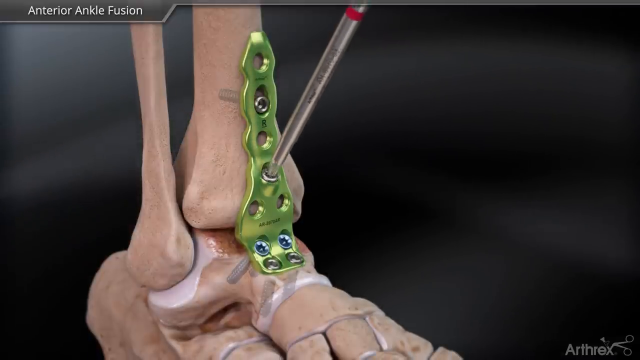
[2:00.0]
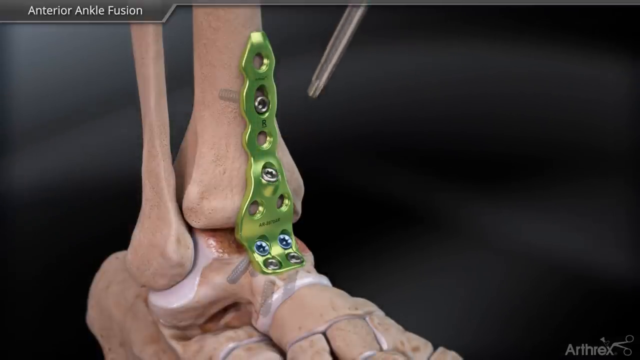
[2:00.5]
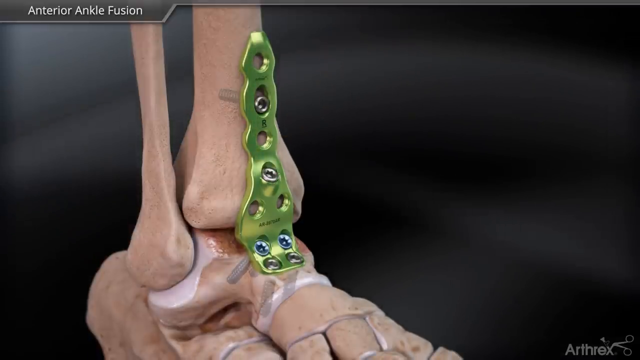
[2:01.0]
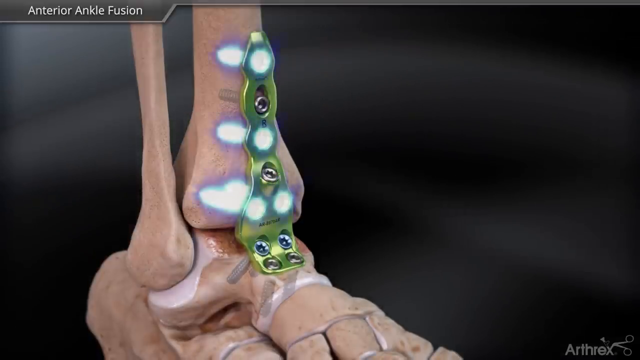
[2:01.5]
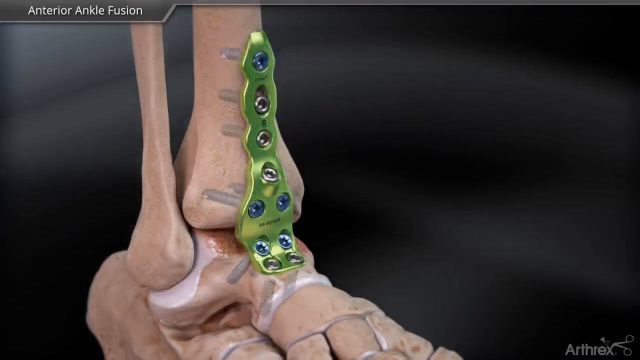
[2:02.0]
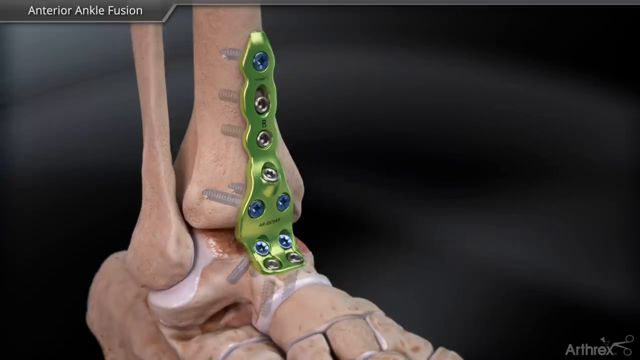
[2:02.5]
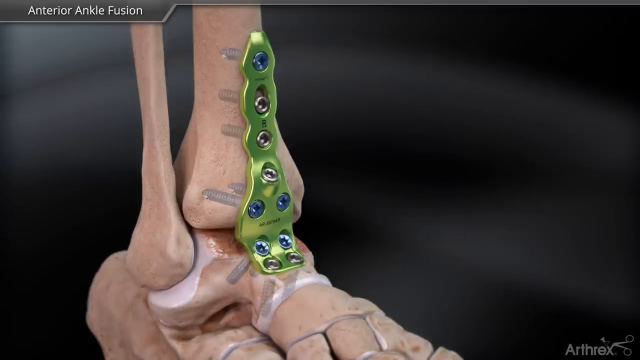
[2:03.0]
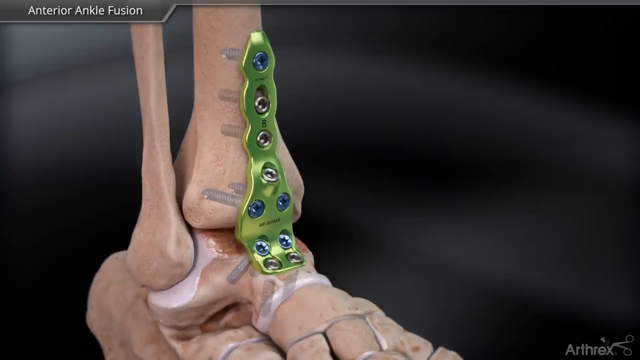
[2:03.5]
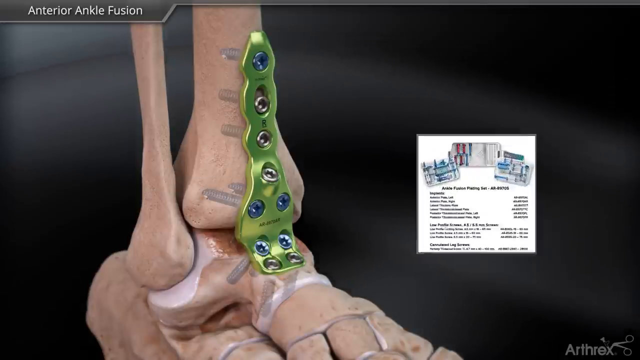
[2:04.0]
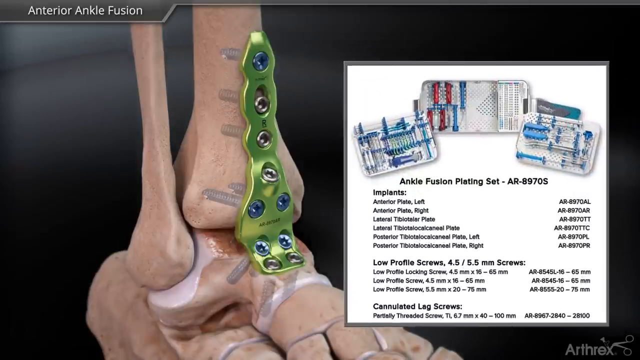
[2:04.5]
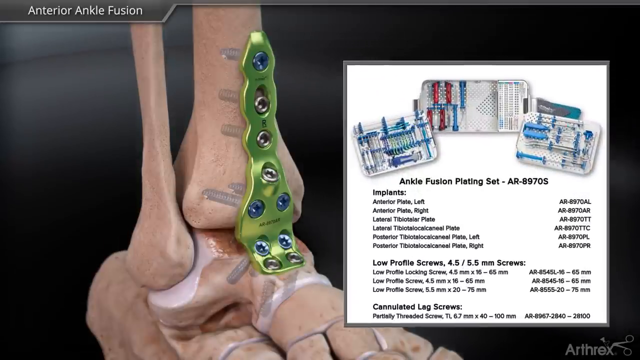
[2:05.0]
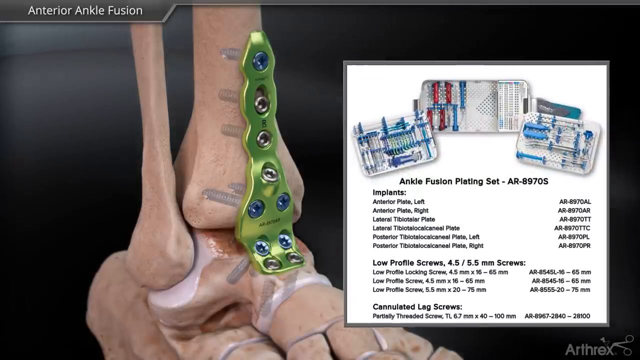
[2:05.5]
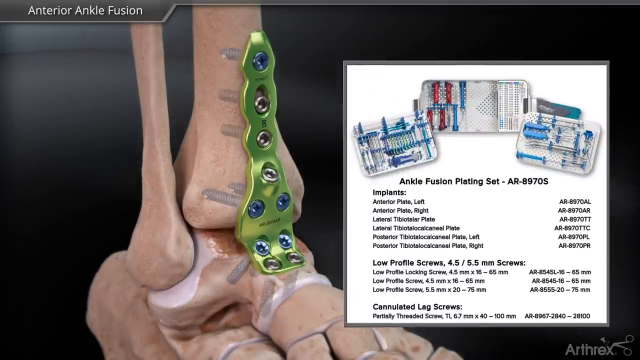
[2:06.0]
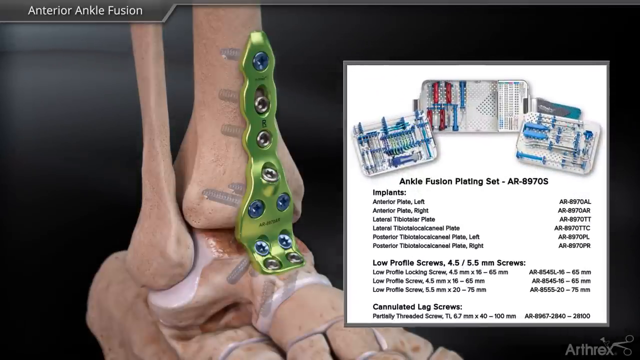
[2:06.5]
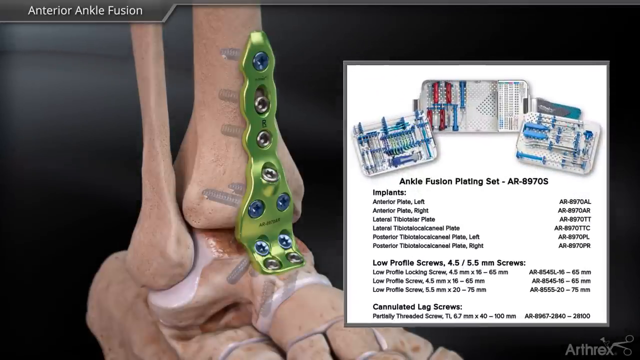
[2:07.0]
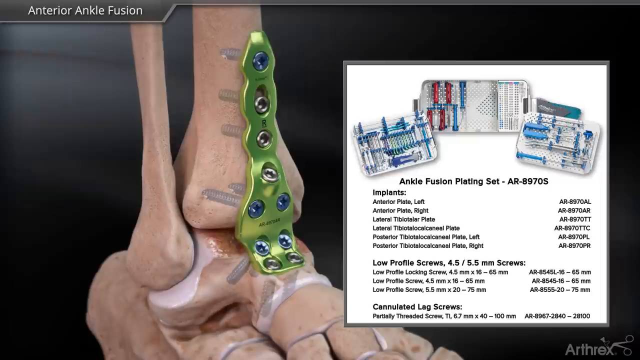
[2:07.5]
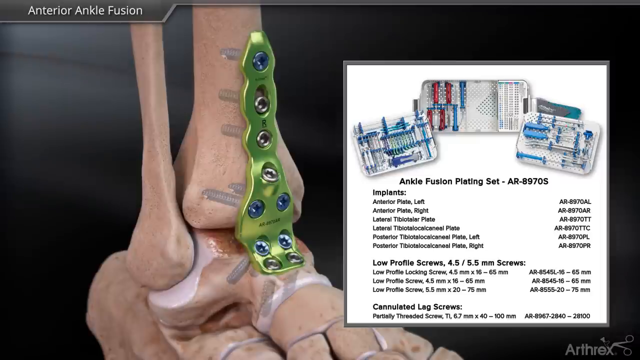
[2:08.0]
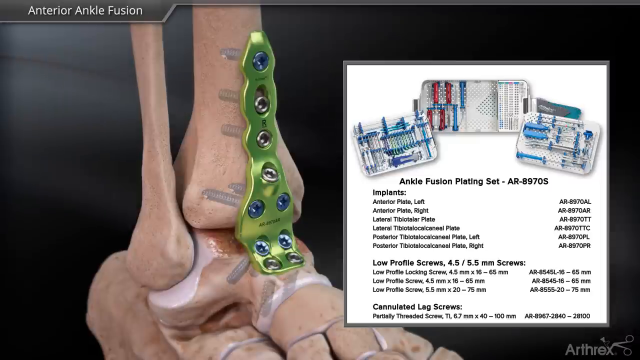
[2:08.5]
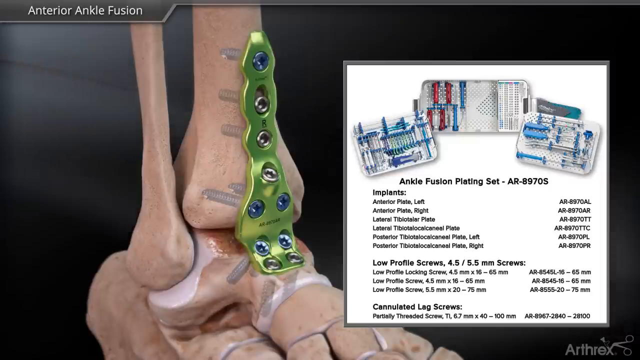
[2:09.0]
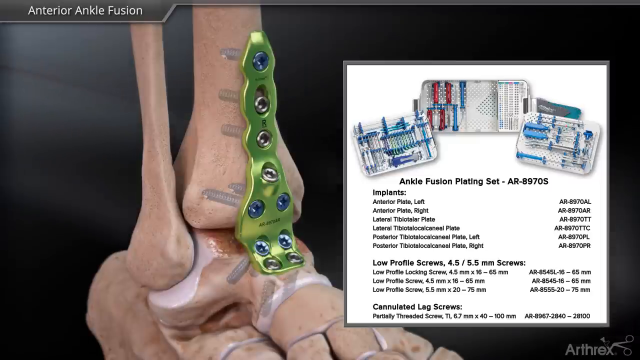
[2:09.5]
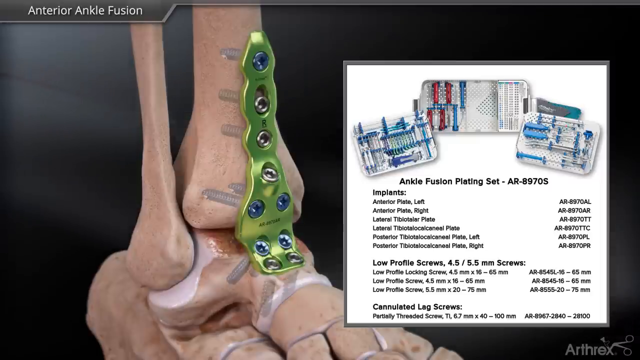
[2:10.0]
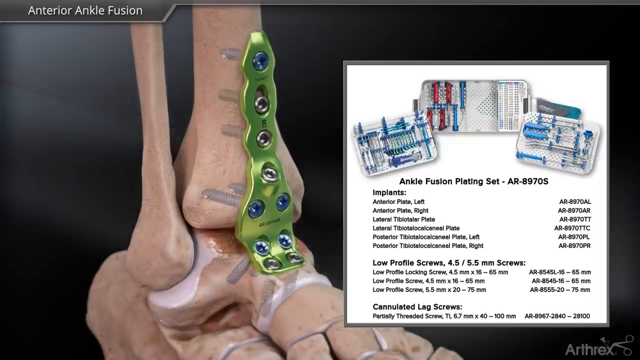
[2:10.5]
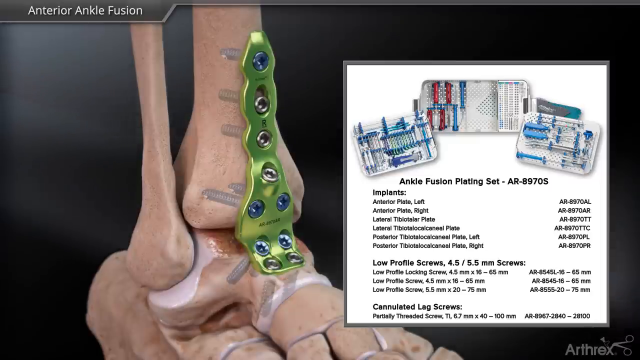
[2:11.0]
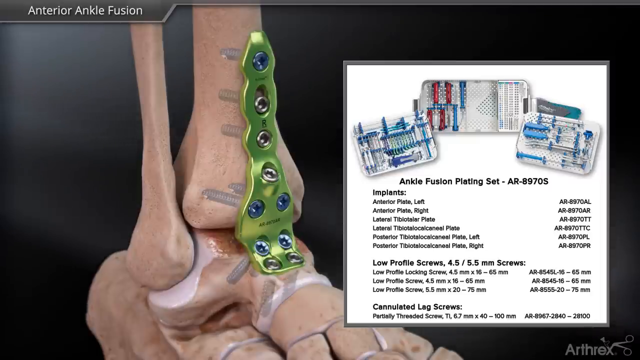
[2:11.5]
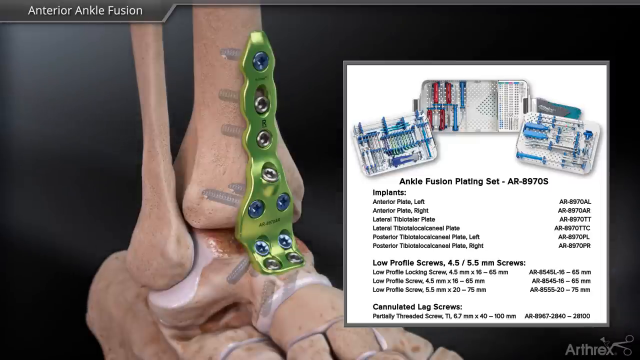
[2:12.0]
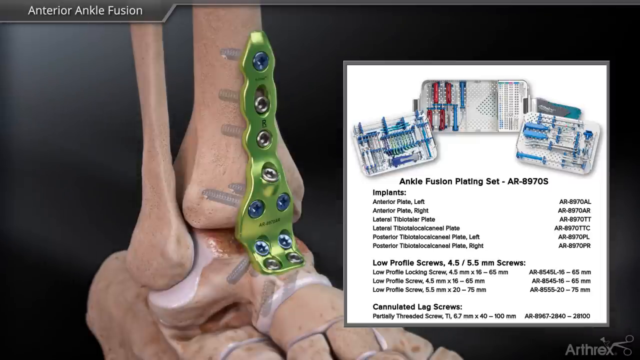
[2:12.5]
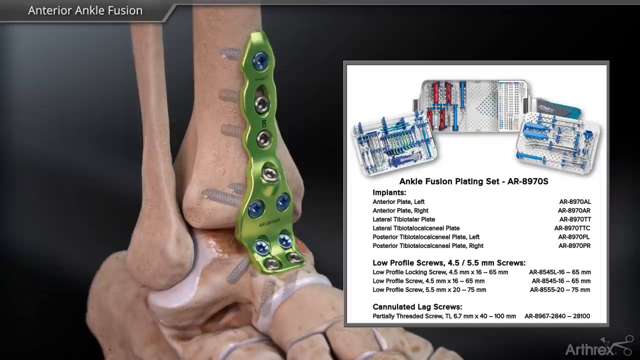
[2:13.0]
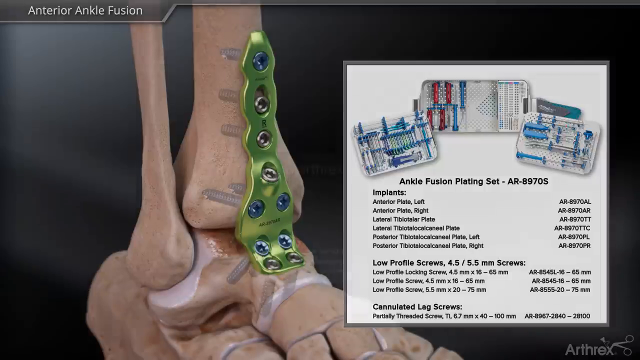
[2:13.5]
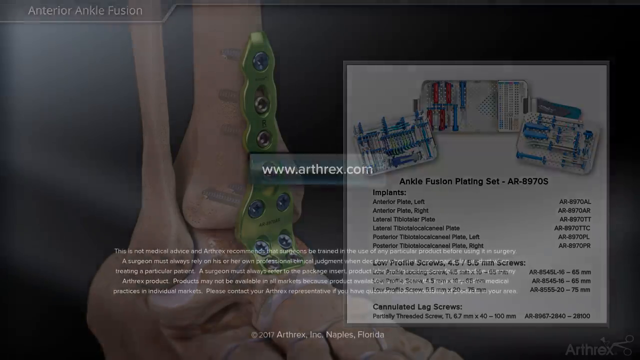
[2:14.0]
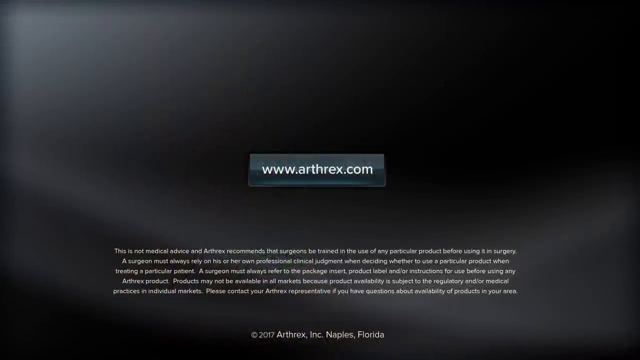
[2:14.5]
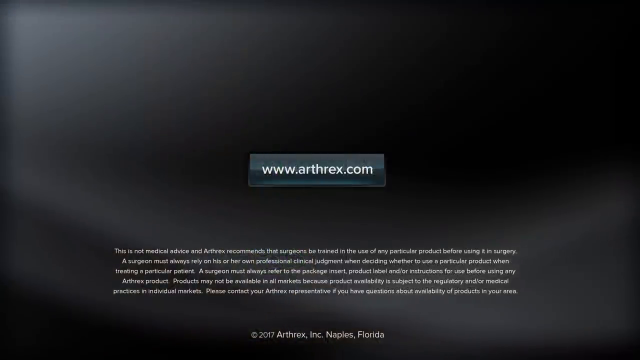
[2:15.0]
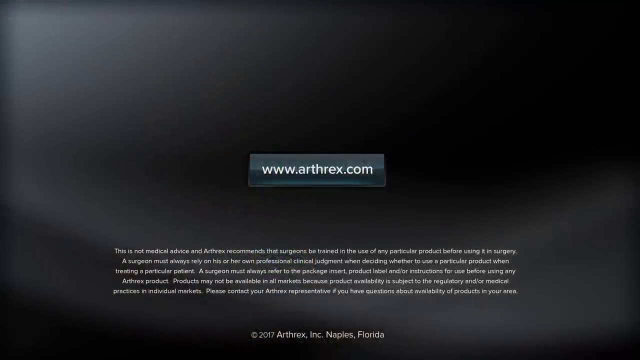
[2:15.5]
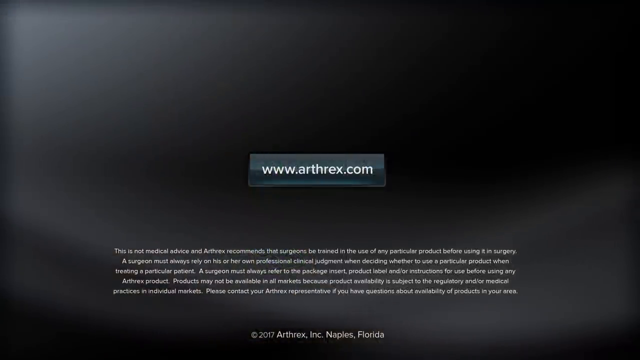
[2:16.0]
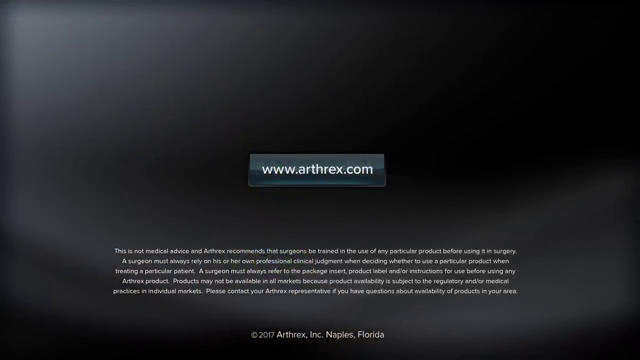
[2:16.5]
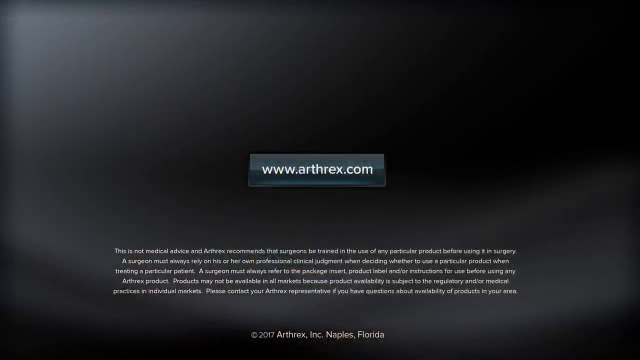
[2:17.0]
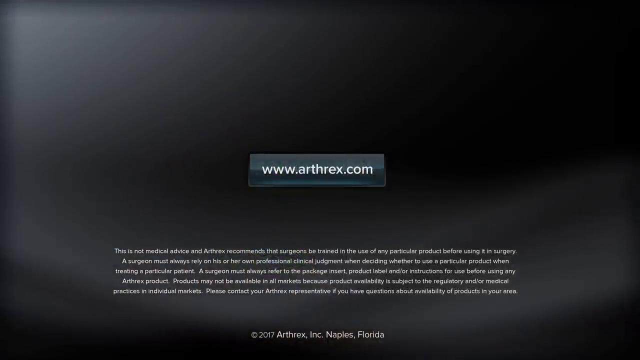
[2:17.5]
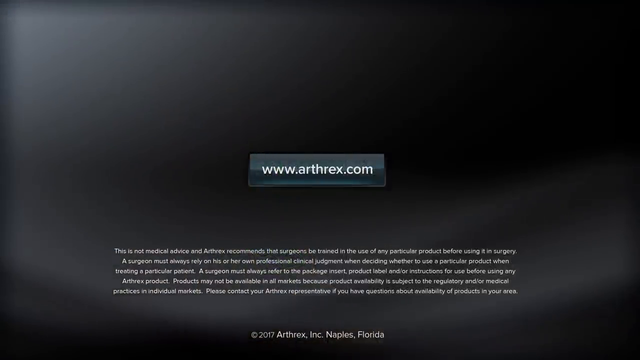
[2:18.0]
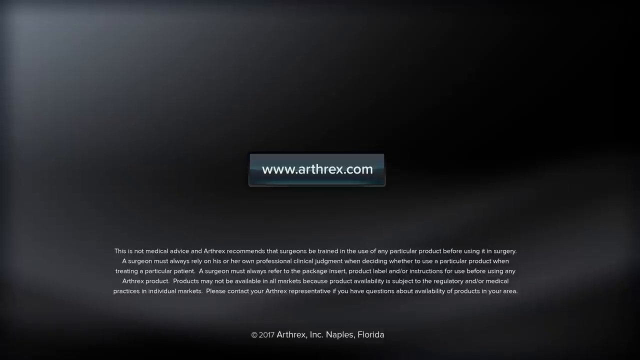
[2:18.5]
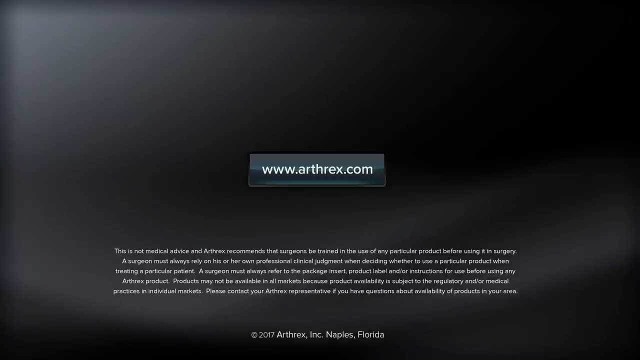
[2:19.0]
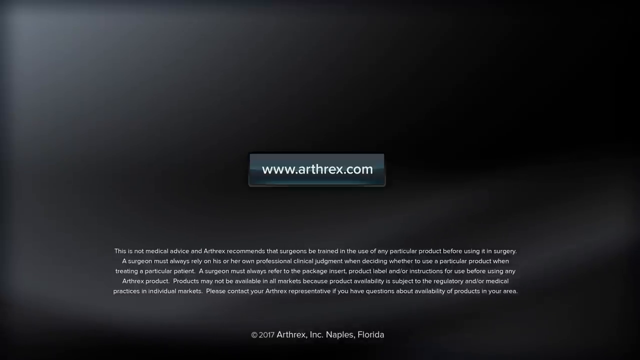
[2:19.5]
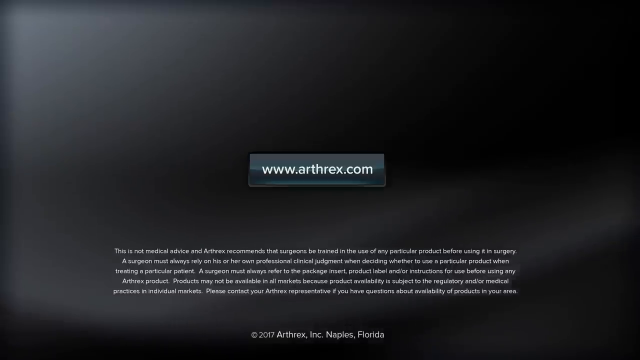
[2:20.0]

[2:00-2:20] An animation appears on the right side of the screen showing all of the different parts needed to complete the ankle fusion, including the implements and the types of screws: low profile screws and partially threaded cannulated leg screws. The part number for the whole ankle fusion plating set is AR8970S, and the individual item number is listed next to each part. The next screen shows a web page reading "www.anthrax.com". A very small disclaimer at the bottom of the screen states that this is not medical advice and that surgeons need to be trained on any product before using it in surgery. A label at the bottom reads "copyright 2017 Anthrax Incorporated Naples, Florida".